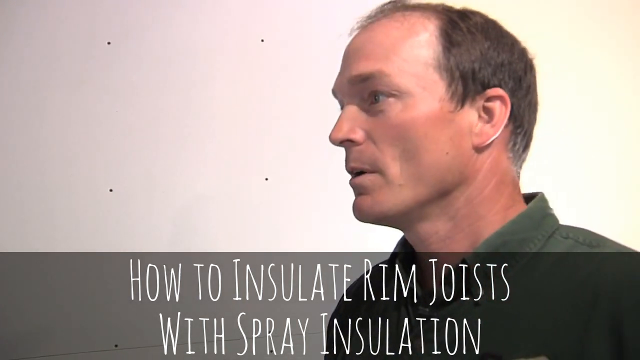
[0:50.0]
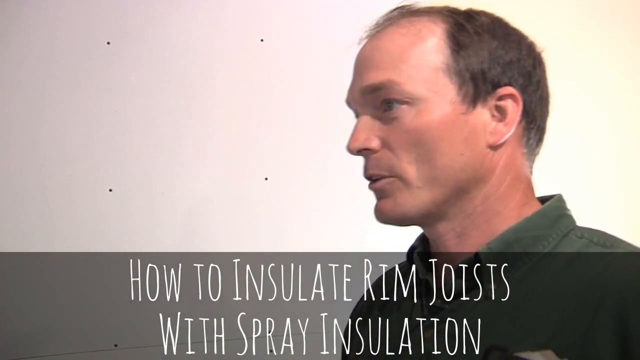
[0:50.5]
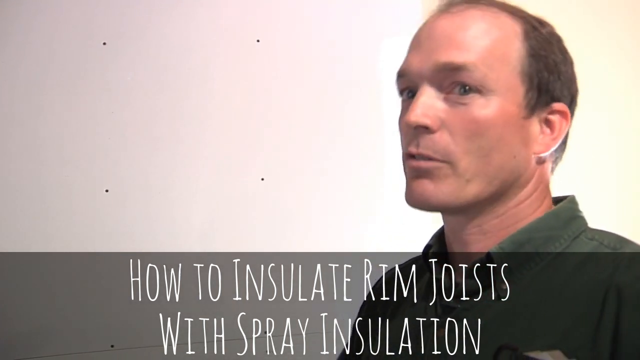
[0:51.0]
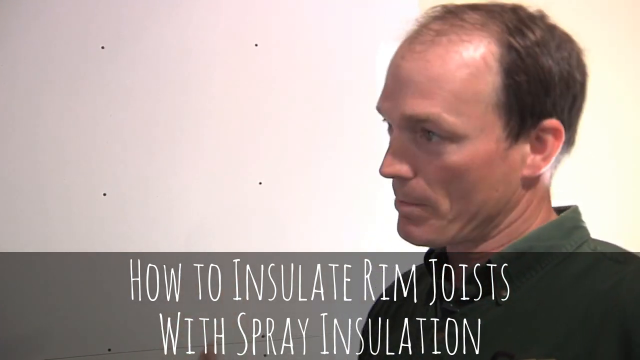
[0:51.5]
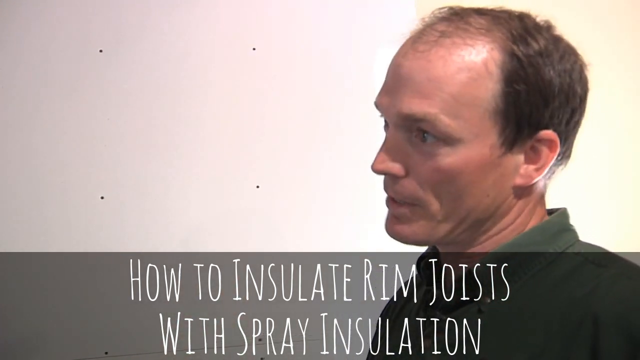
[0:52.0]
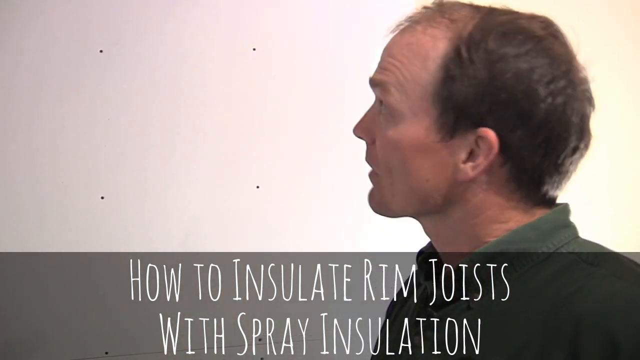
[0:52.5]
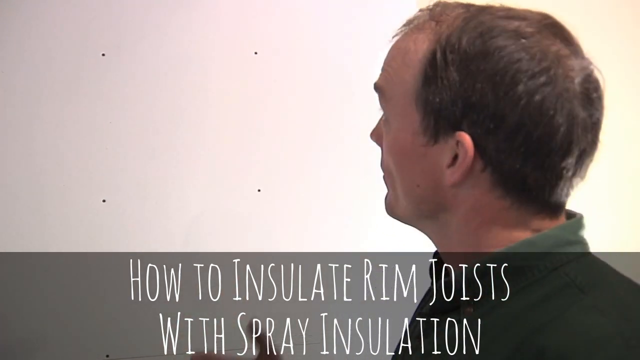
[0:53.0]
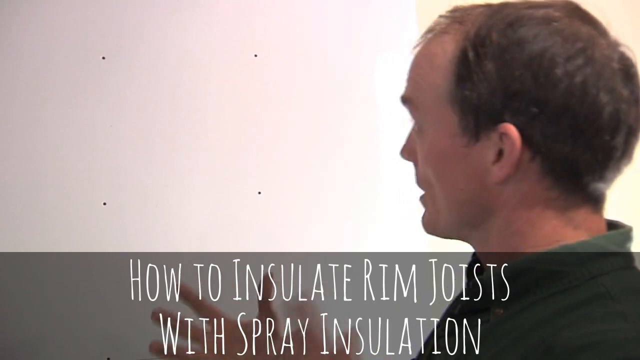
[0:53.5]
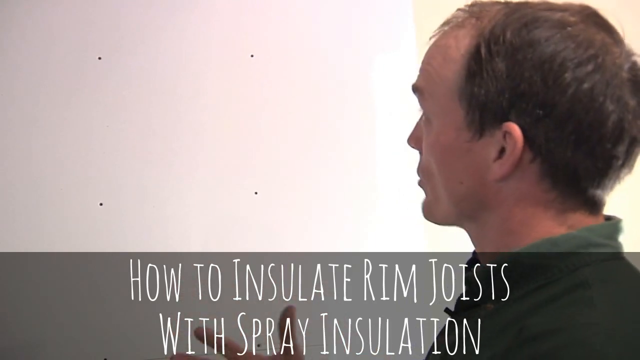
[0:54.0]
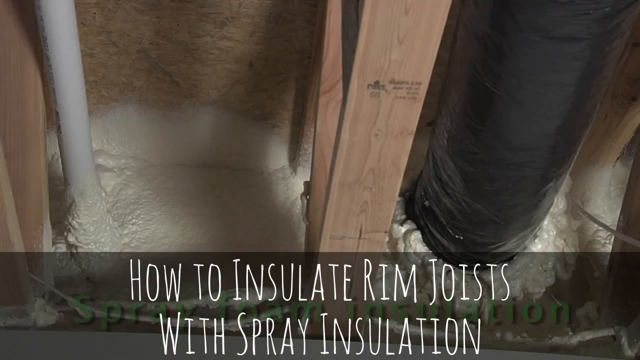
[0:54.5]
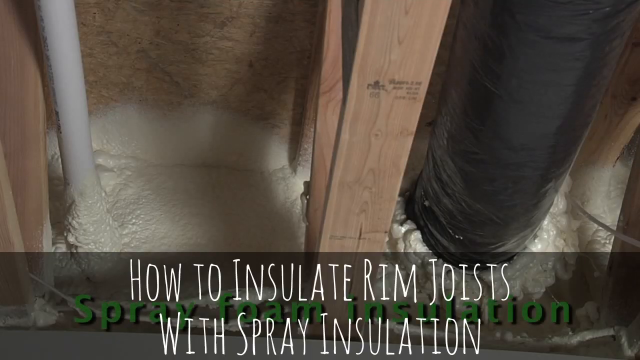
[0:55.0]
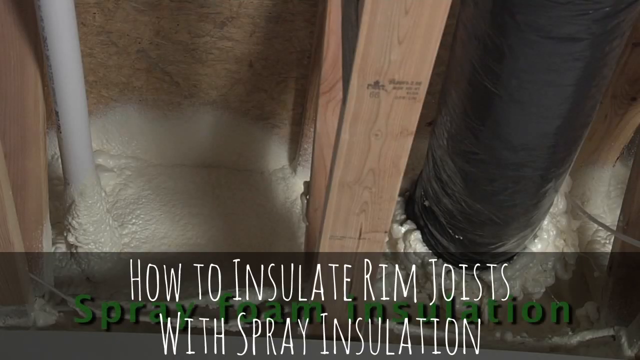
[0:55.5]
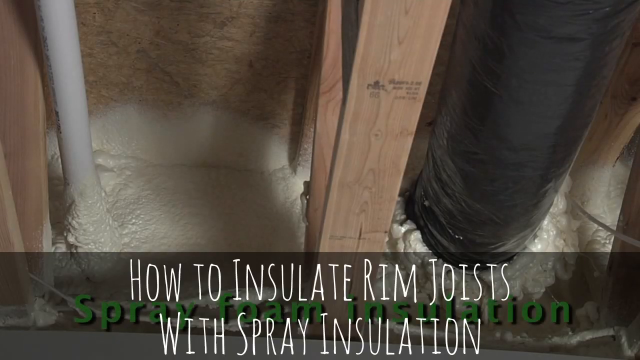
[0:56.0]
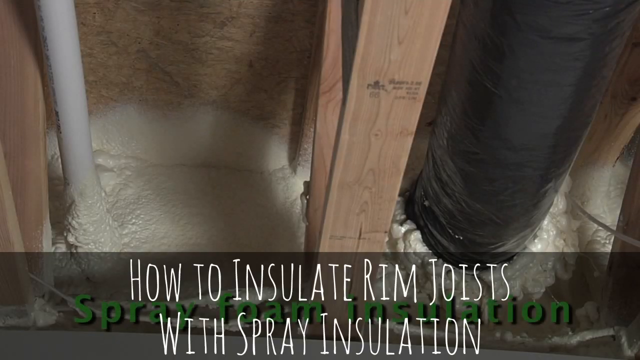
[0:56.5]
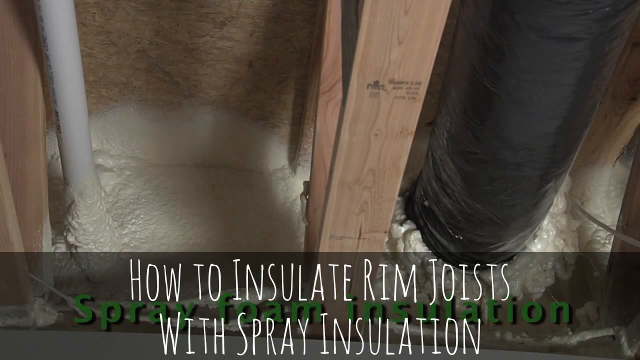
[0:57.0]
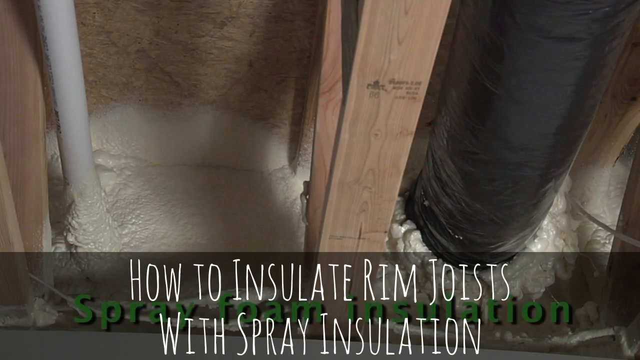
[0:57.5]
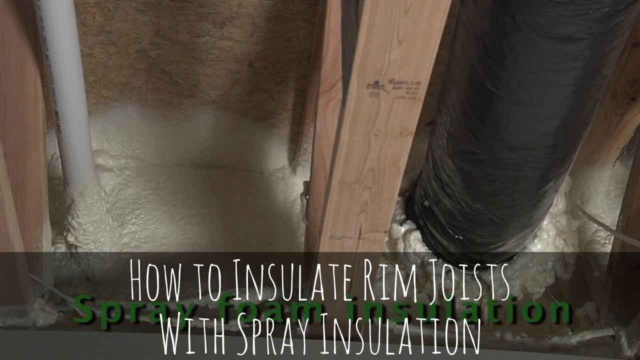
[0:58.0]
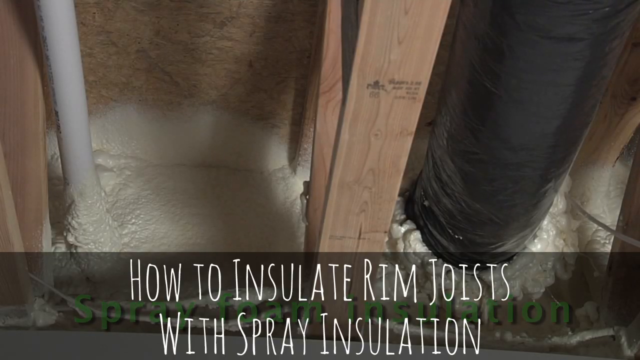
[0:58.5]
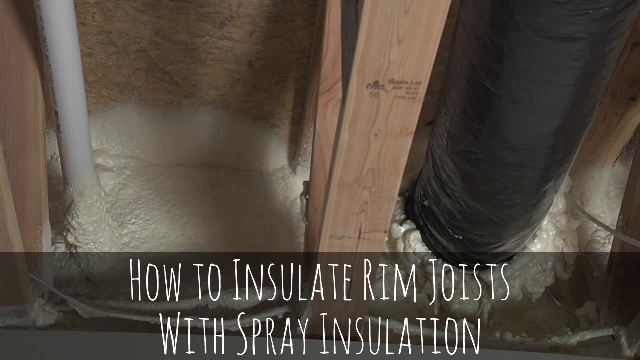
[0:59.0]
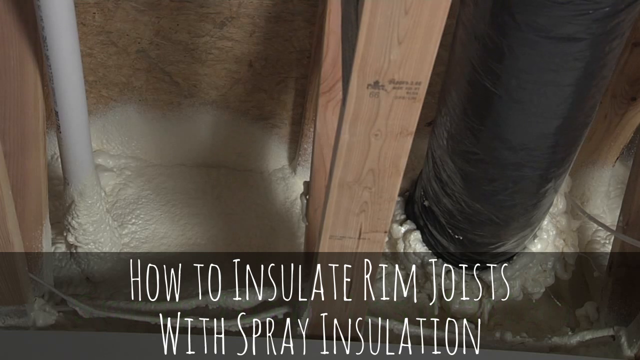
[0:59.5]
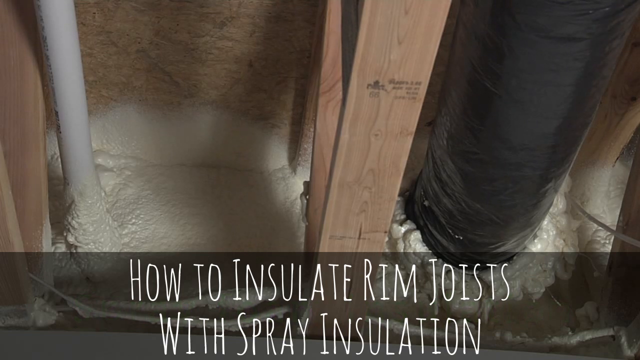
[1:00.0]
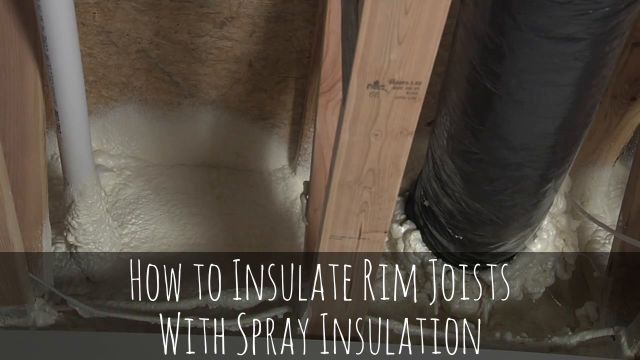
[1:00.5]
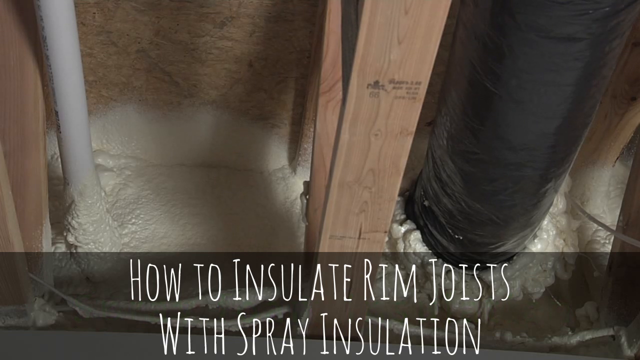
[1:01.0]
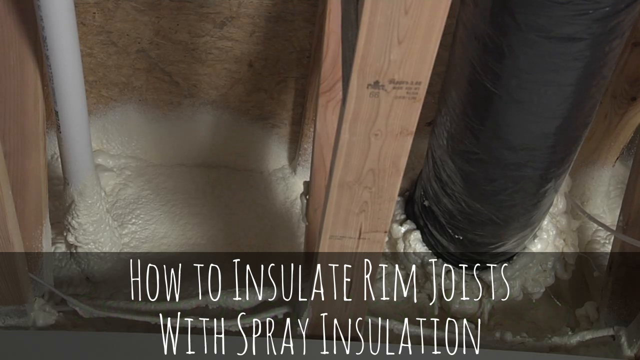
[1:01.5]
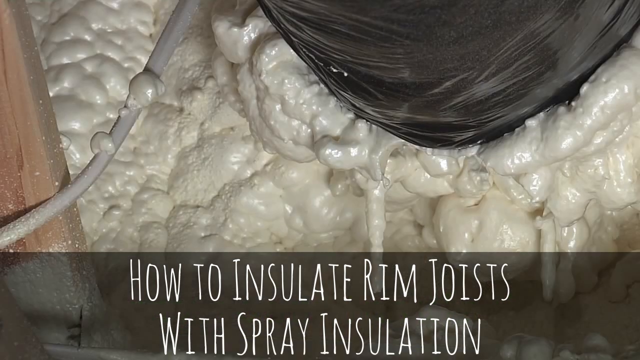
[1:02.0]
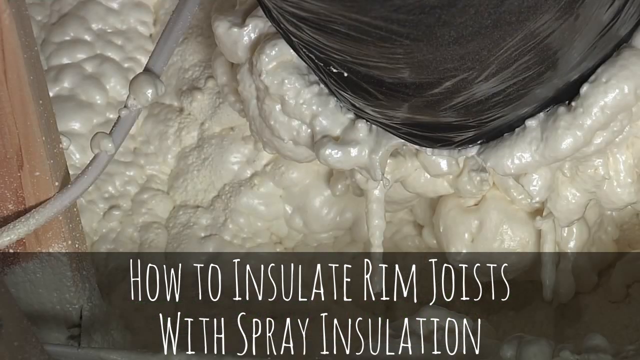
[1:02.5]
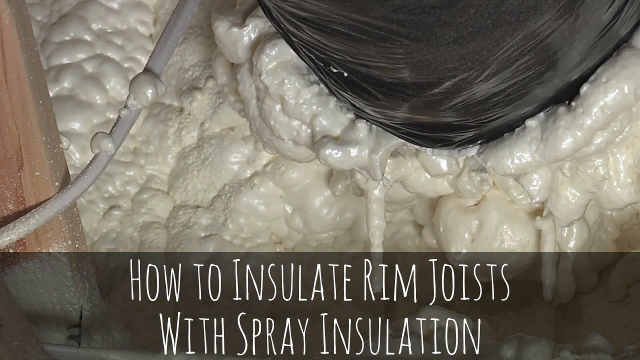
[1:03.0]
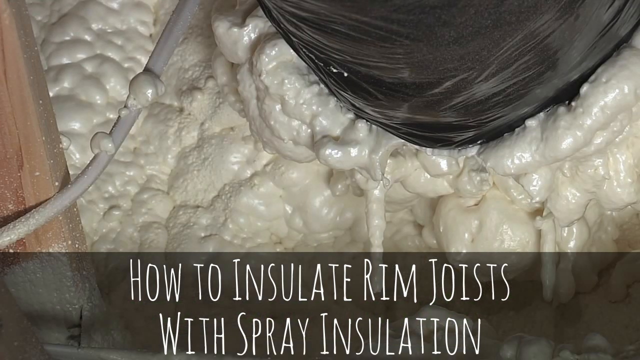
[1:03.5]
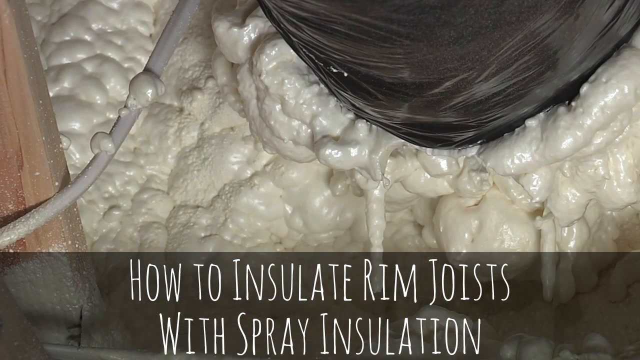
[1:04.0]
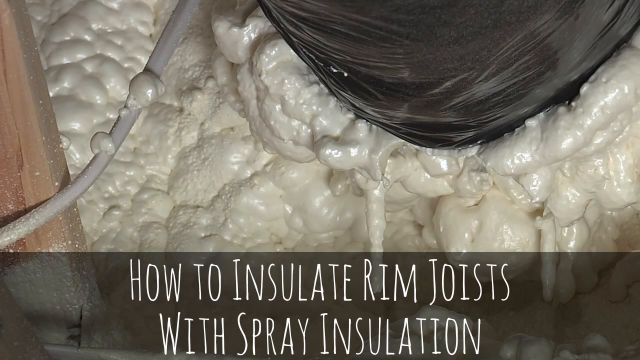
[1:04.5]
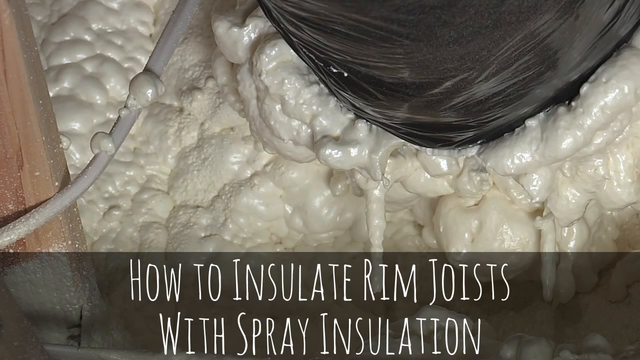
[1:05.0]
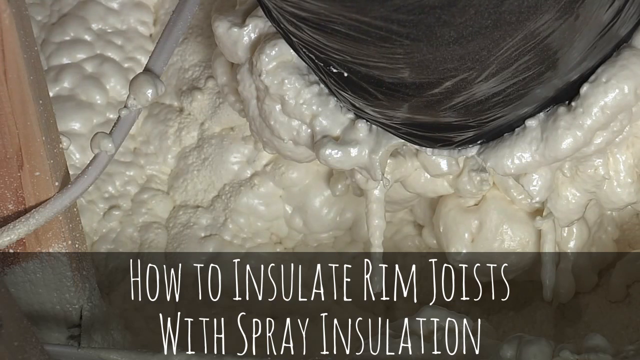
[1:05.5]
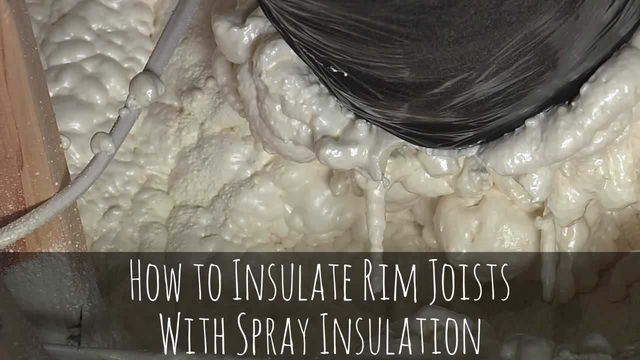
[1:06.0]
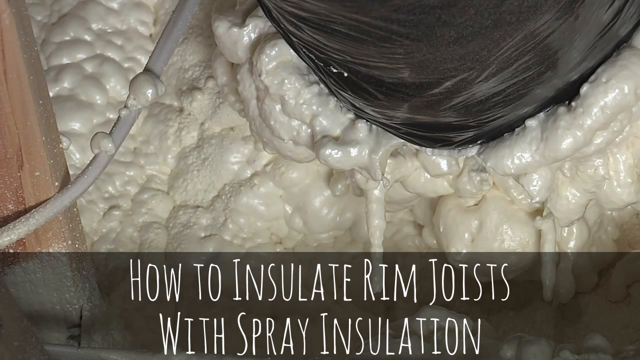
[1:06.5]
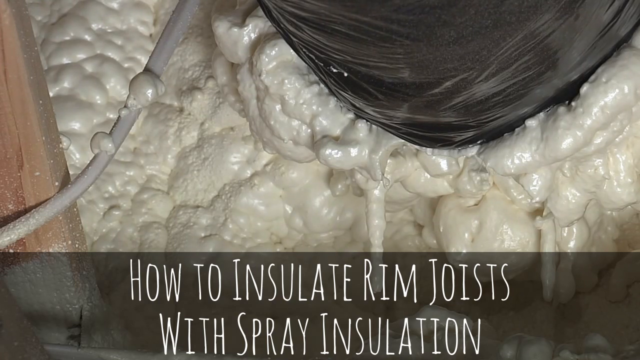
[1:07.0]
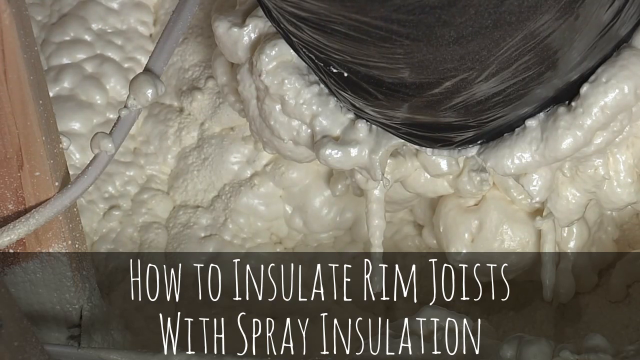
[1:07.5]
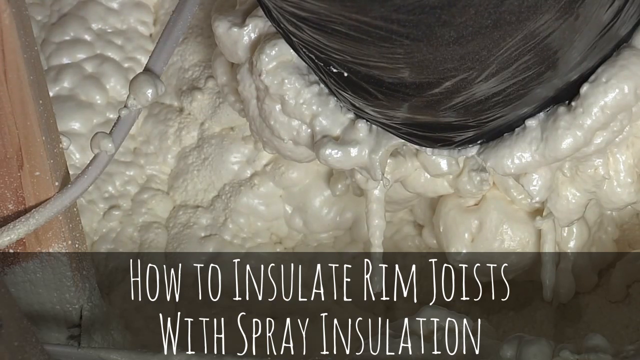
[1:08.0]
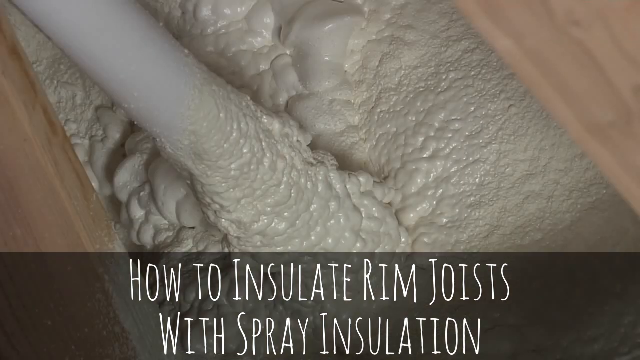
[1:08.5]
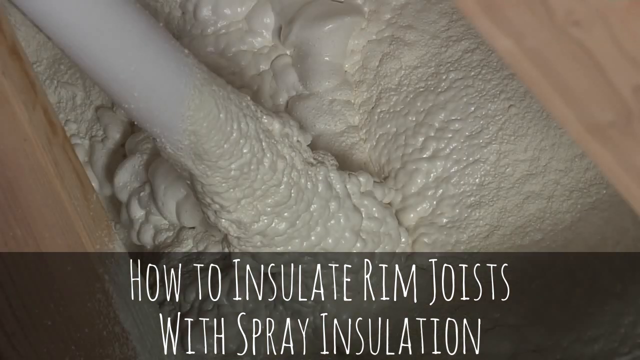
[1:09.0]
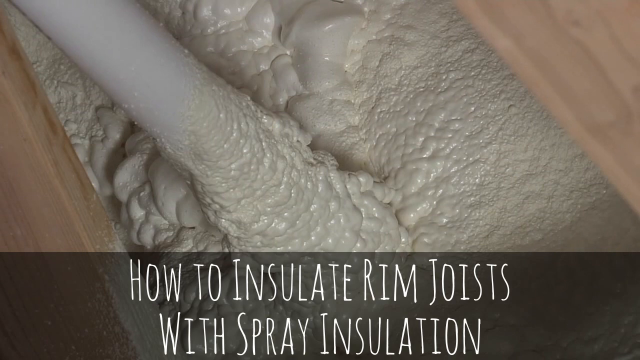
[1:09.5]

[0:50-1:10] Text at the bottom of the screen reads "how to insulate the rim joints with spray insulator", and green text says "spray foam insulation". The roof is shown with three pipes, two white and one black; the black pipe has the biggest diameter and the white pipe on the left has the smallest. The spray foam insulation forms a white layer around the pipes. The camera zooms further into the black pipe, showing the whitish foam tightly surrounding and insulating it. It then zooms further into the white pipe, showing the same spray foam properly surrounding and insulating it.